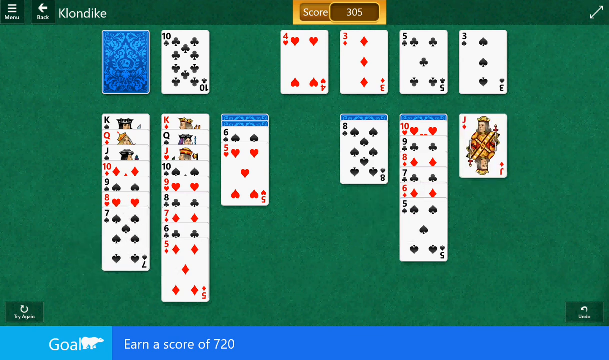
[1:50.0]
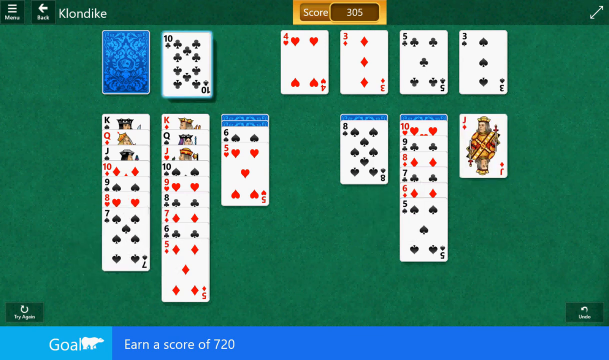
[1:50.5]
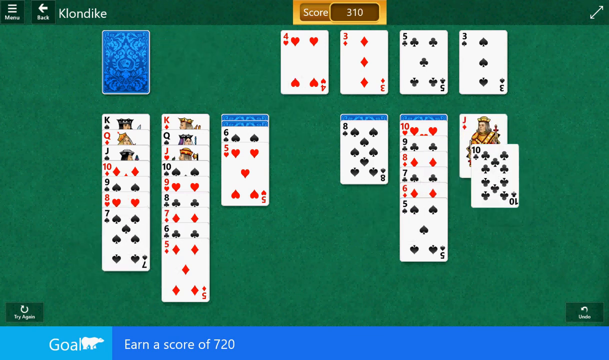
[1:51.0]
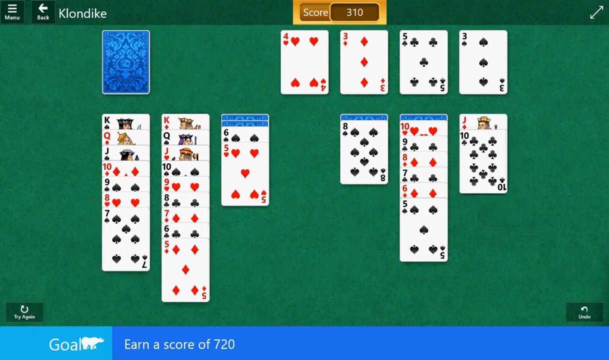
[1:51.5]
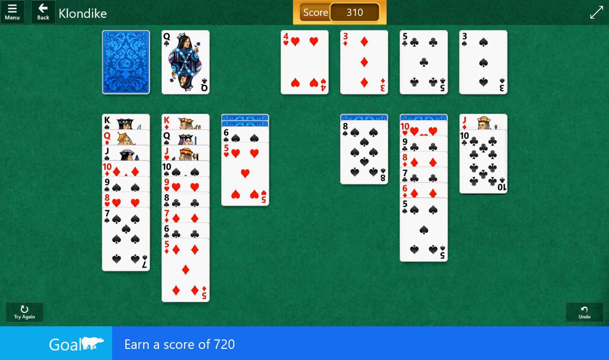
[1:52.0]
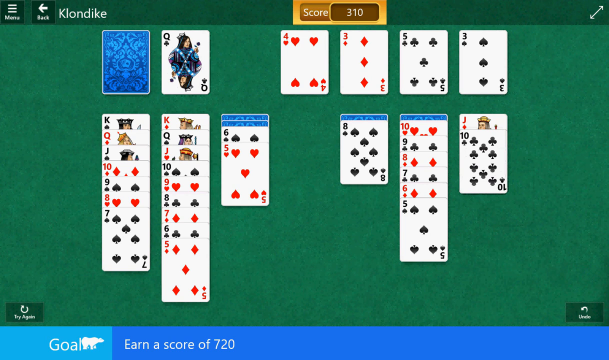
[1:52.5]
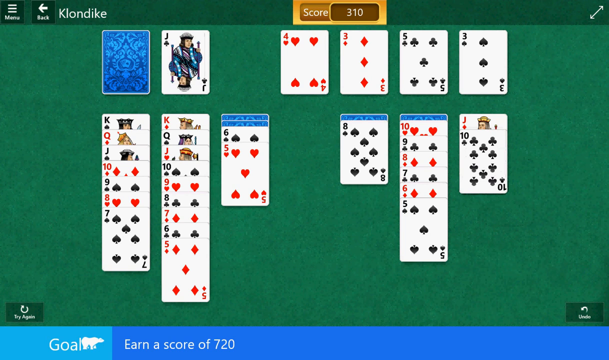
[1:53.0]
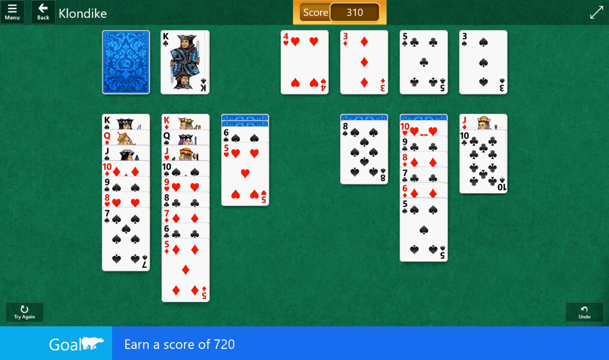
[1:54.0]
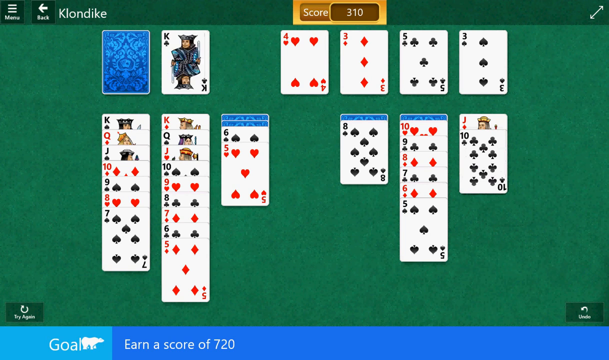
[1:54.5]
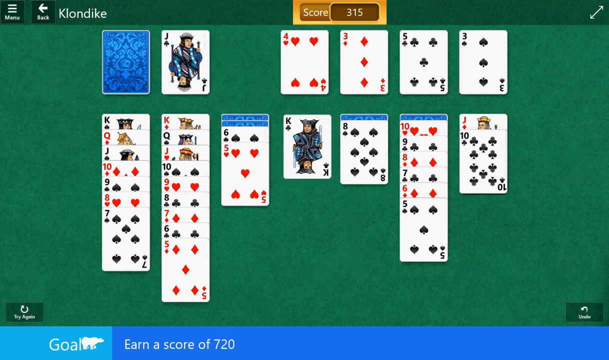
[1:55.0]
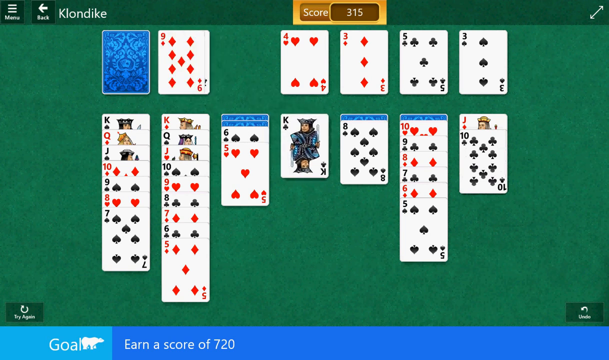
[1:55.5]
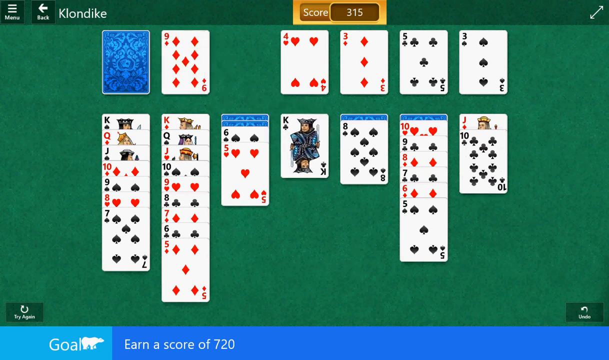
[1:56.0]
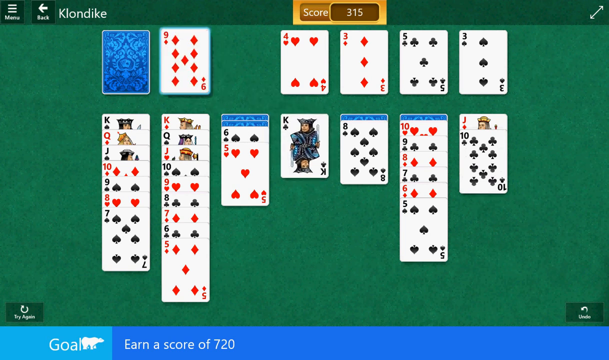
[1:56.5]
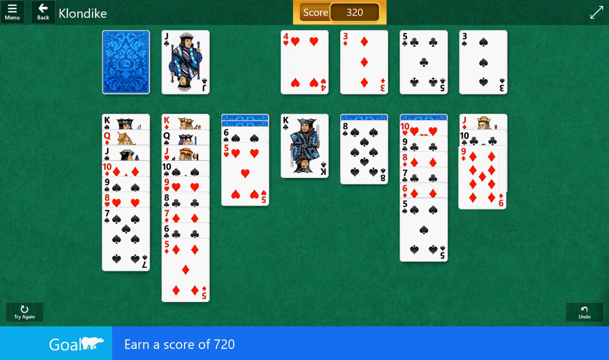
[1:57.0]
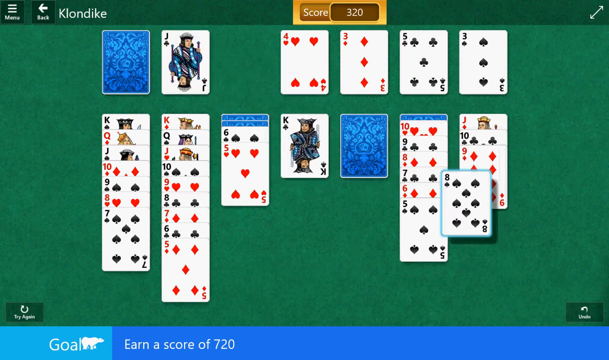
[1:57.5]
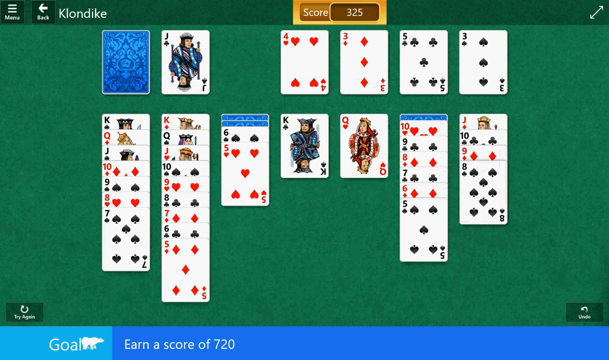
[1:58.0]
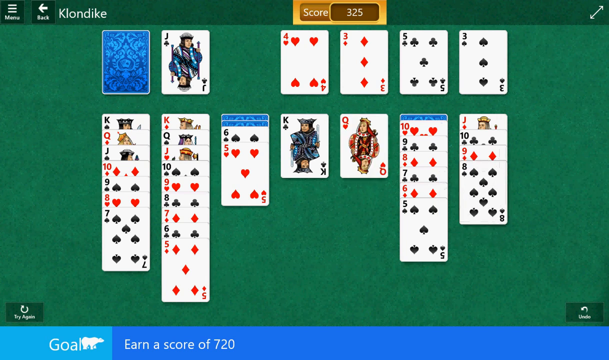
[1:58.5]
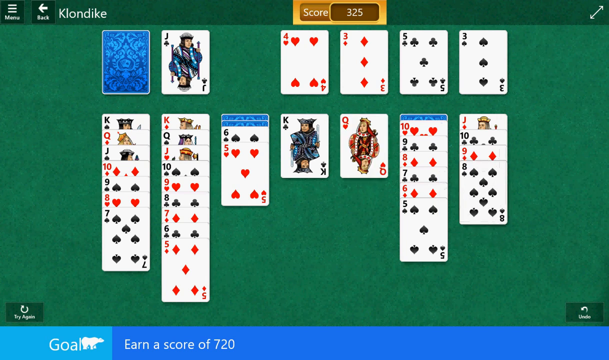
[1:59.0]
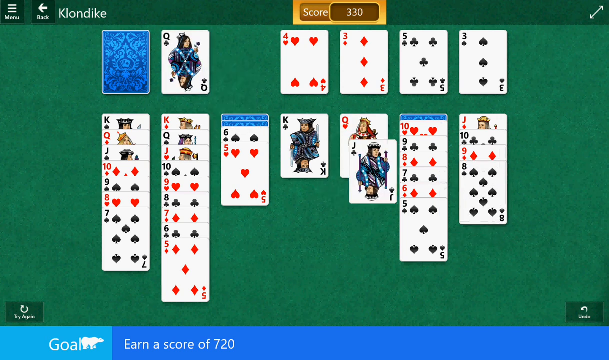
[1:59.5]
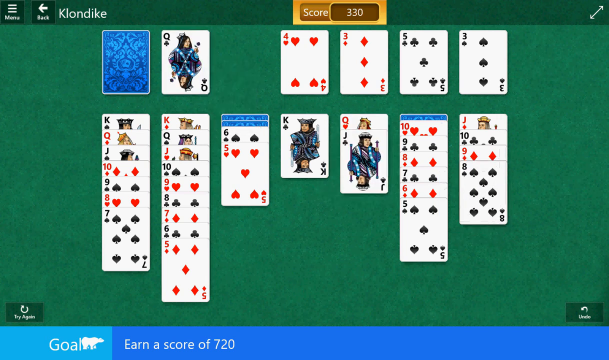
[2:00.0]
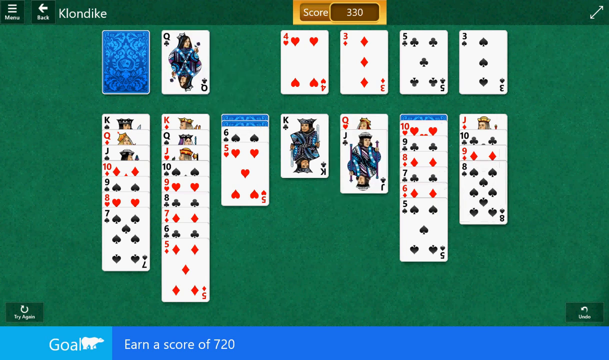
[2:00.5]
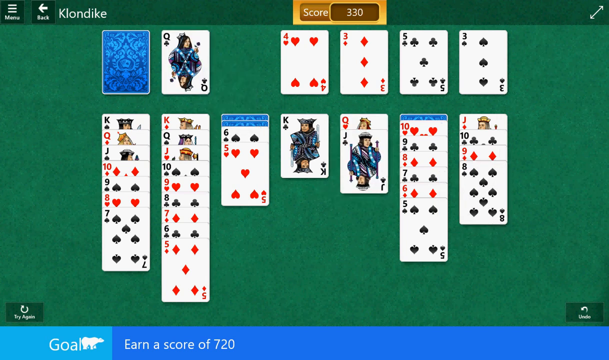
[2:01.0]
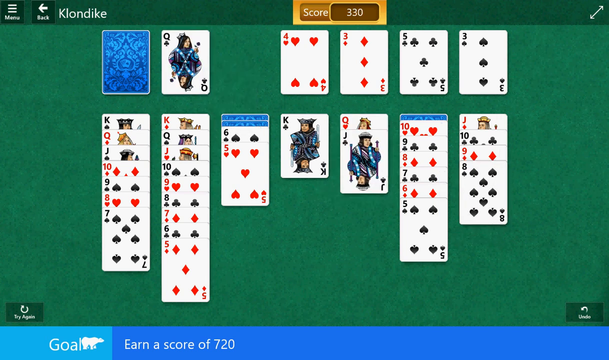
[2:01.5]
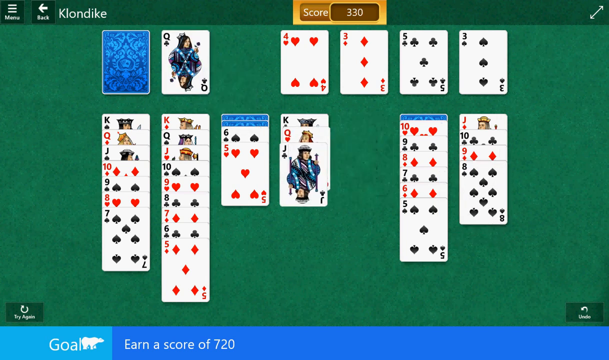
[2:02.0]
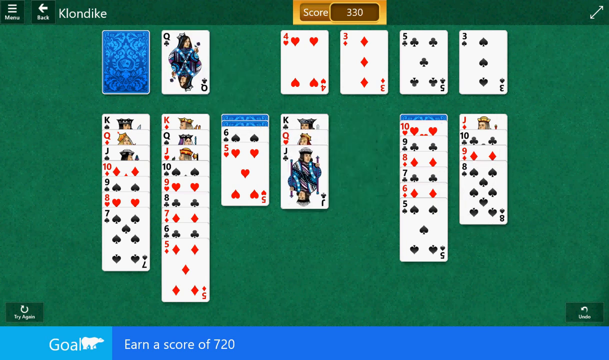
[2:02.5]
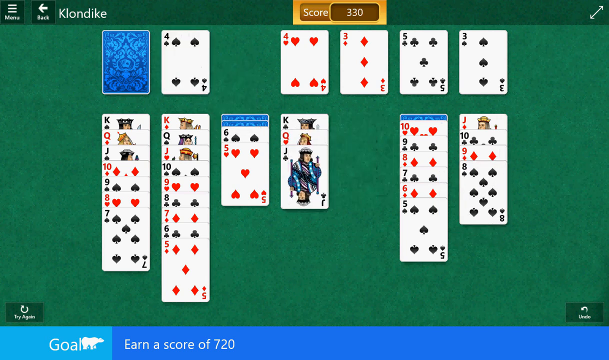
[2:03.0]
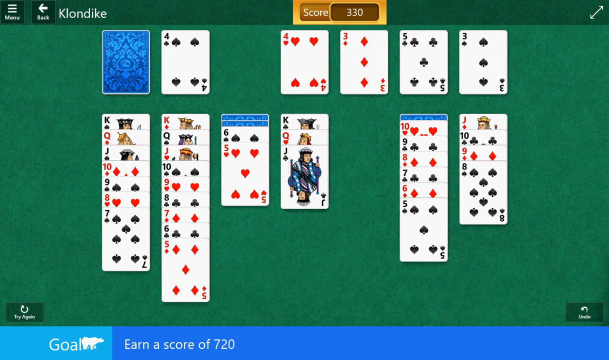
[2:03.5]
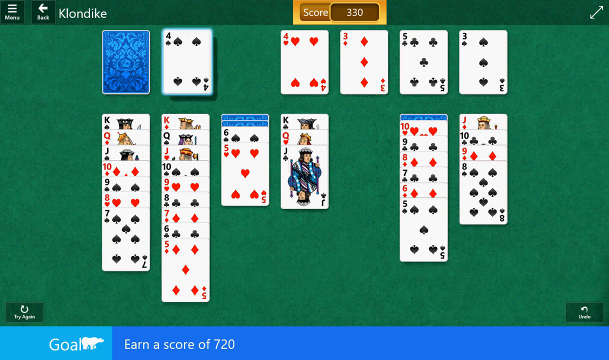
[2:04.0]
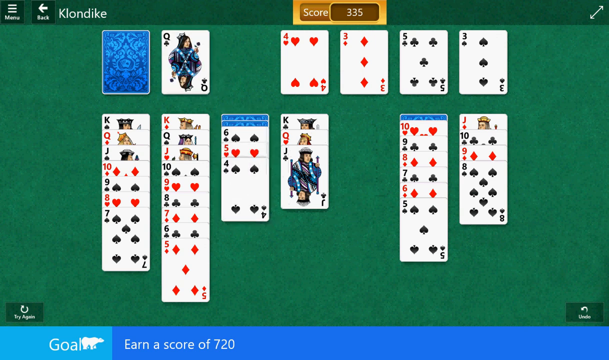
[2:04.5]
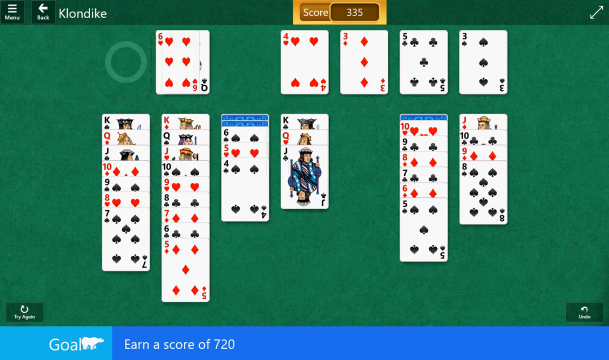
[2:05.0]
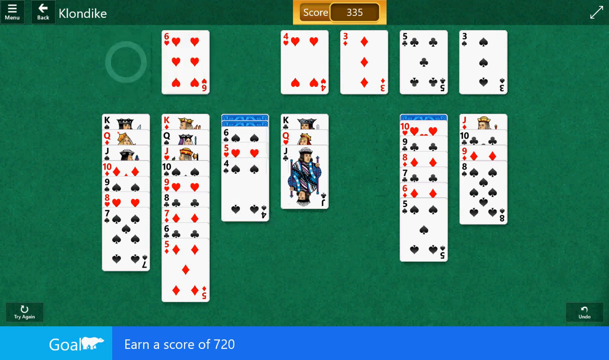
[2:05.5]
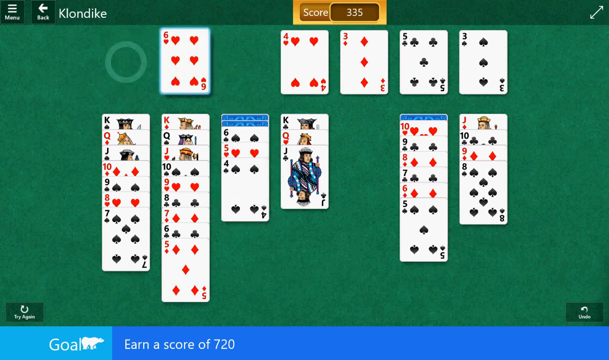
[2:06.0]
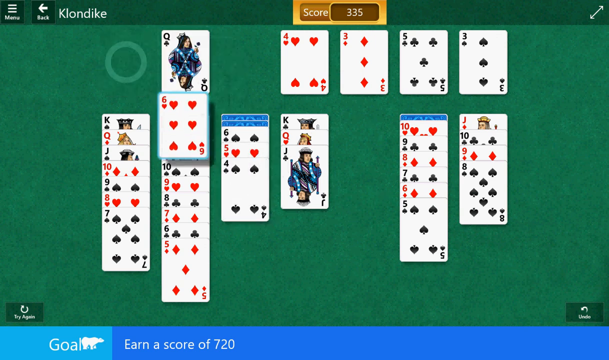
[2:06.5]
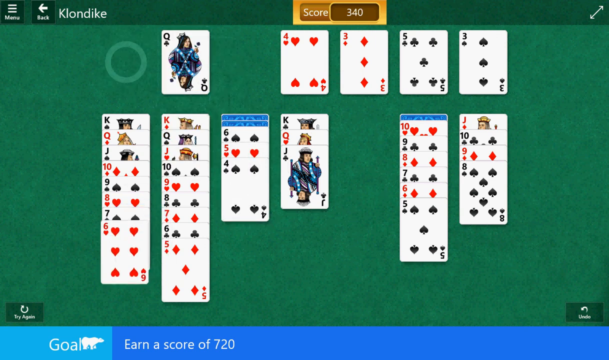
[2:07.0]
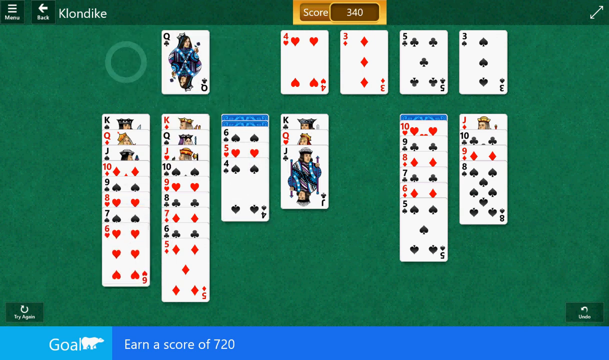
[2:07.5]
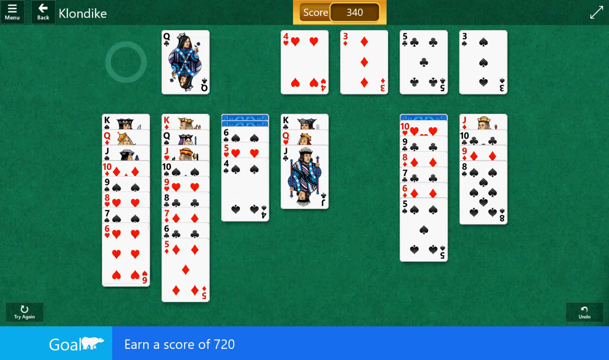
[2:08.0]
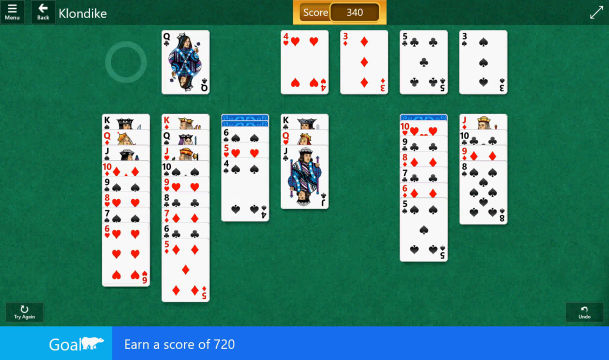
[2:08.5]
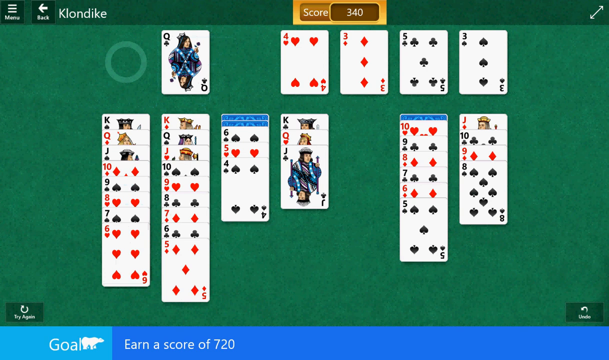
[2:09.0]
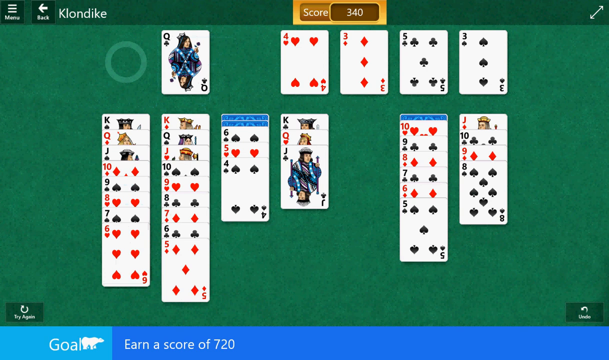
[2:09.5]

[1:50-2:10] A game called Klondike is shown on a green background, with a deck of cards whose backs are blue, kind of a paisley blue. The cards are dealt out like a solitaire game, probably a version called Klondike. The name of the game is in the upper left corner along with a menu button and a back button, and the right-hand corner has a diagonal arrow for making the page larger or smaller. All the aces are up at this point, and cards are being built on them in order: ace, two, three, four, and upward. The score starts at 305 and goes up five points with each card moved, reaching 340 and continuing.